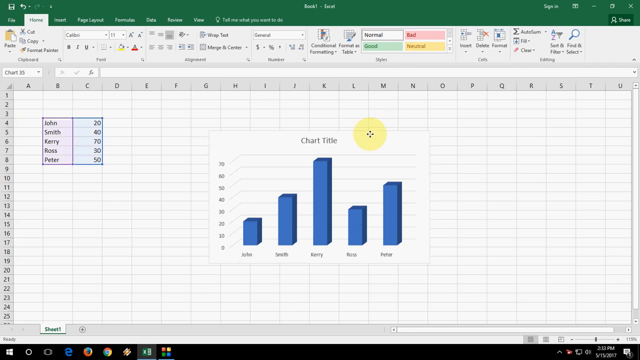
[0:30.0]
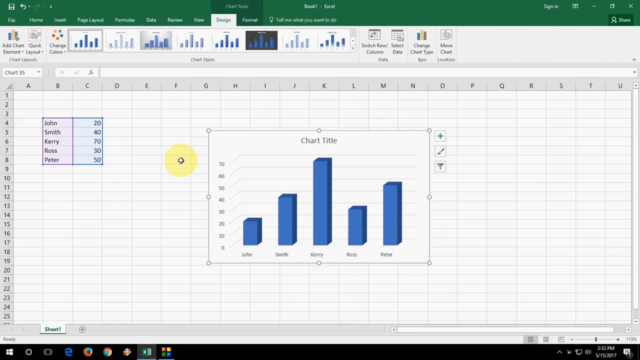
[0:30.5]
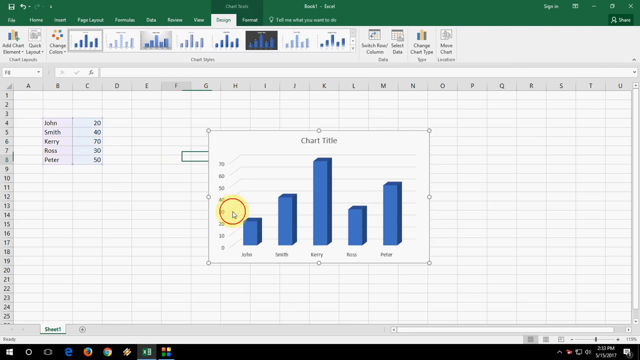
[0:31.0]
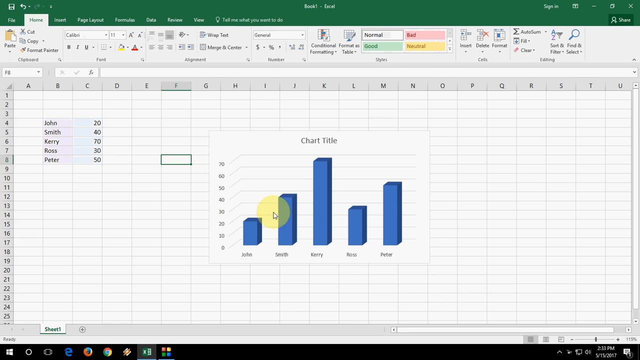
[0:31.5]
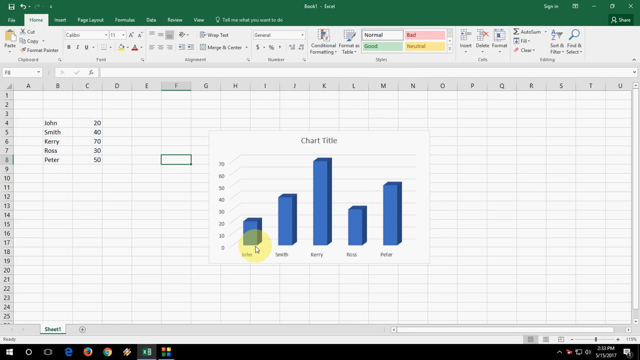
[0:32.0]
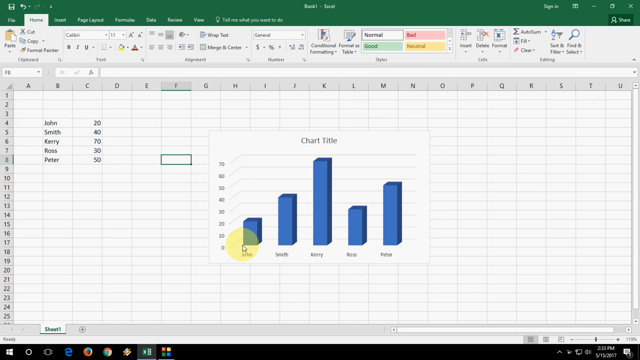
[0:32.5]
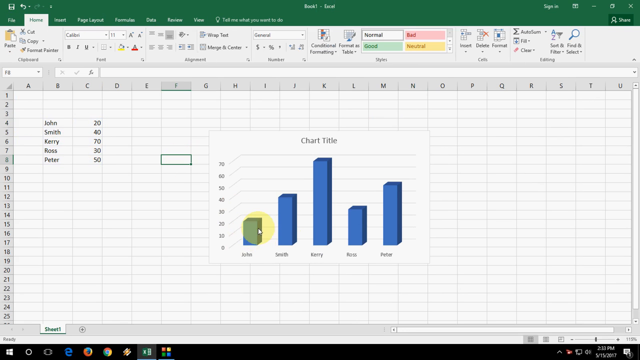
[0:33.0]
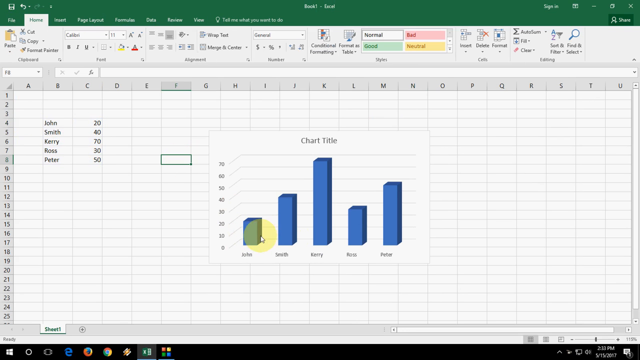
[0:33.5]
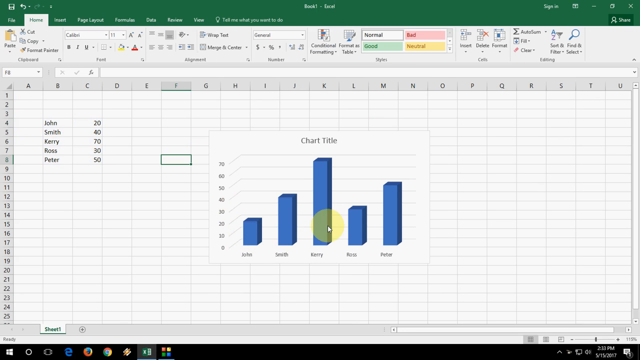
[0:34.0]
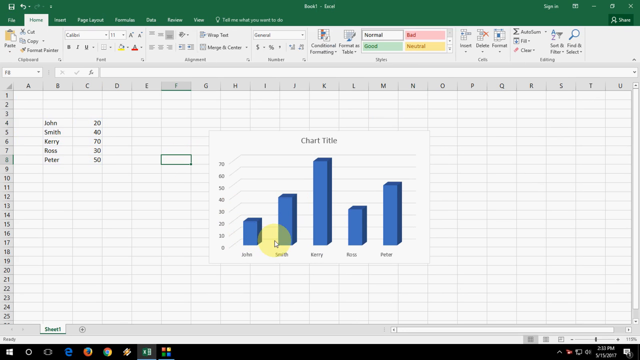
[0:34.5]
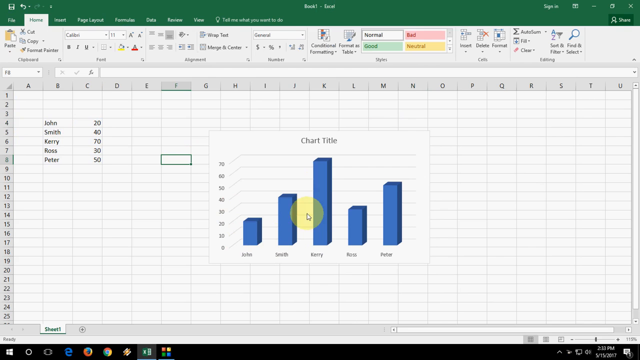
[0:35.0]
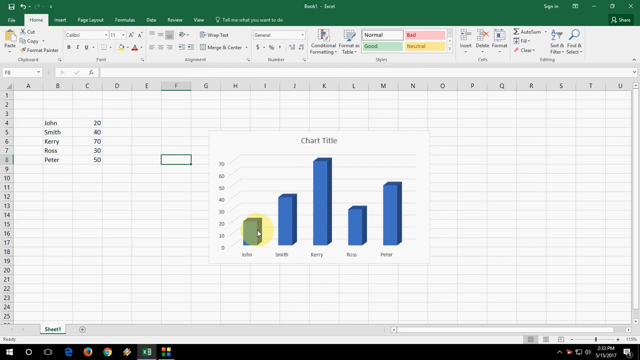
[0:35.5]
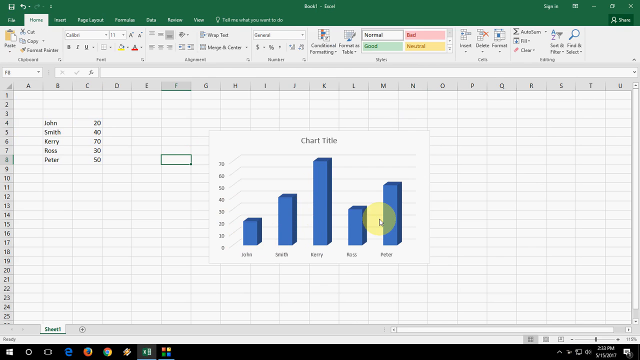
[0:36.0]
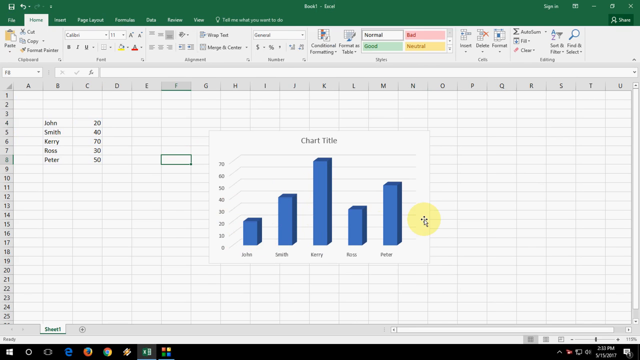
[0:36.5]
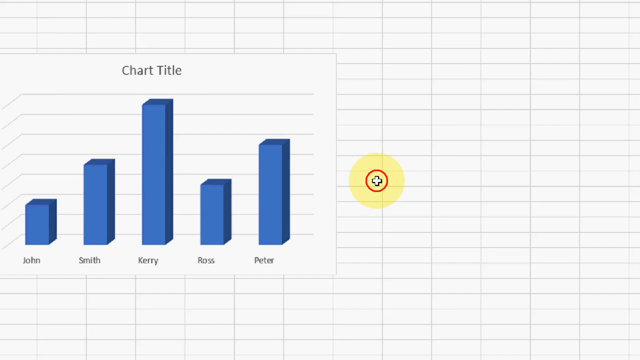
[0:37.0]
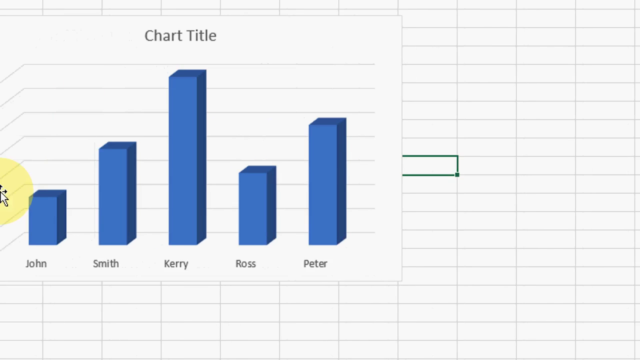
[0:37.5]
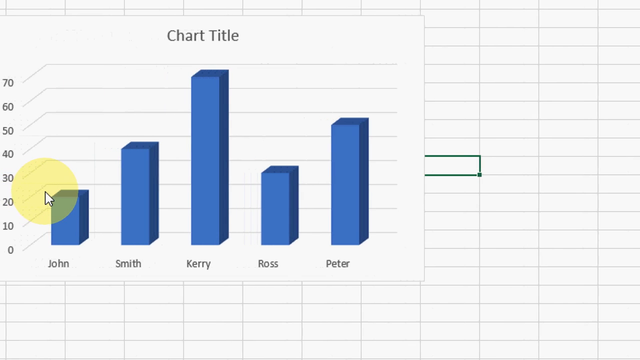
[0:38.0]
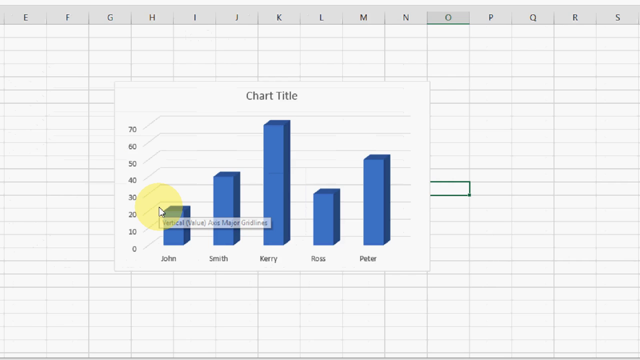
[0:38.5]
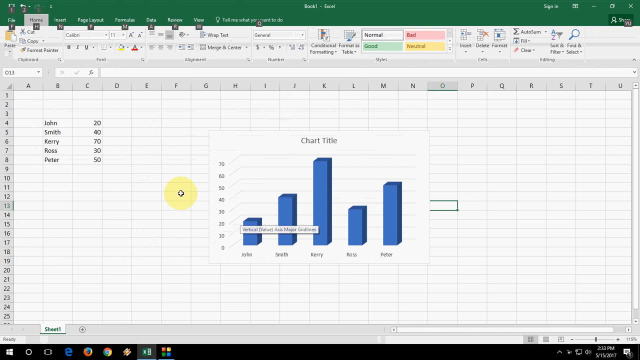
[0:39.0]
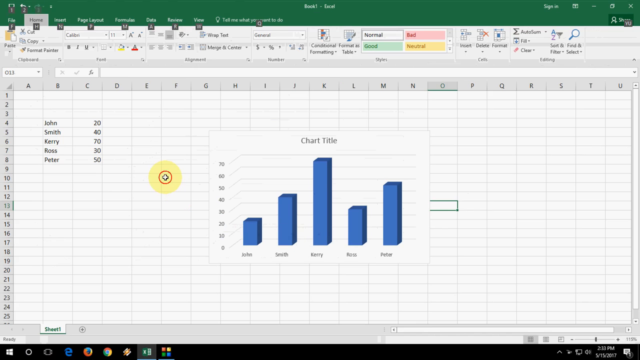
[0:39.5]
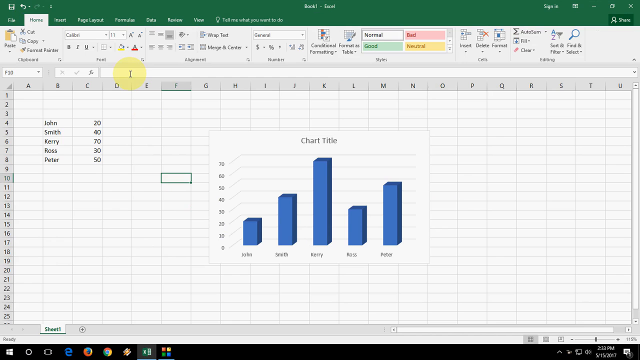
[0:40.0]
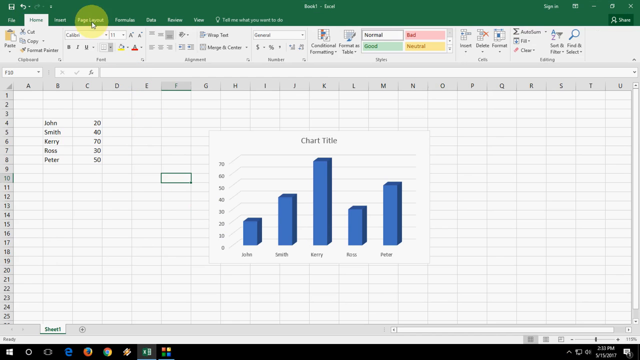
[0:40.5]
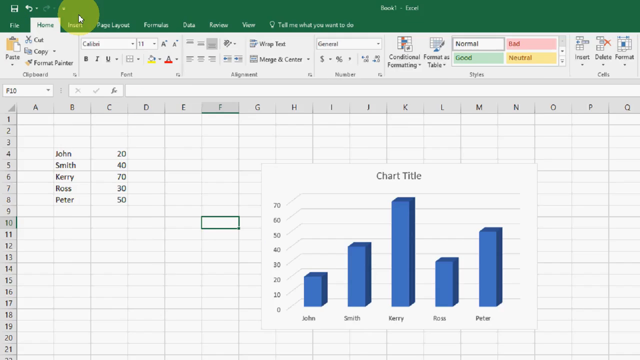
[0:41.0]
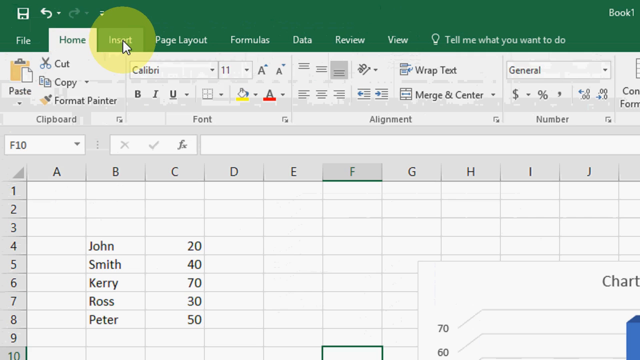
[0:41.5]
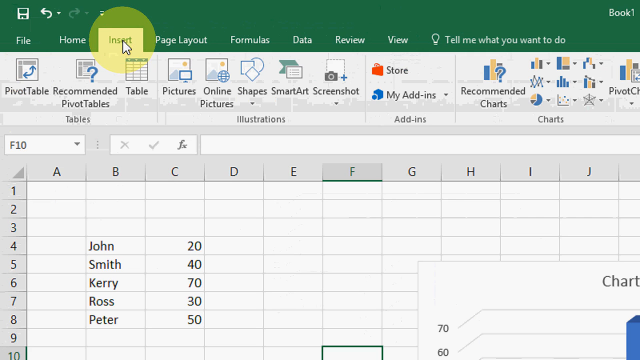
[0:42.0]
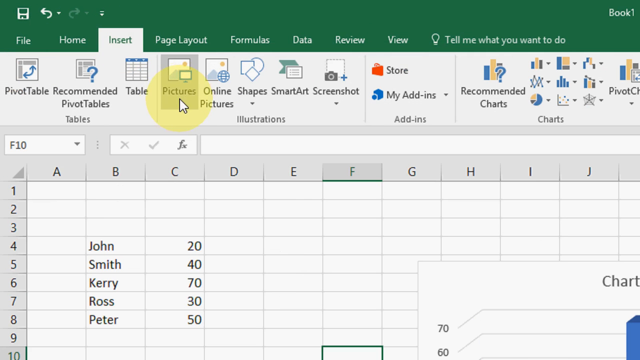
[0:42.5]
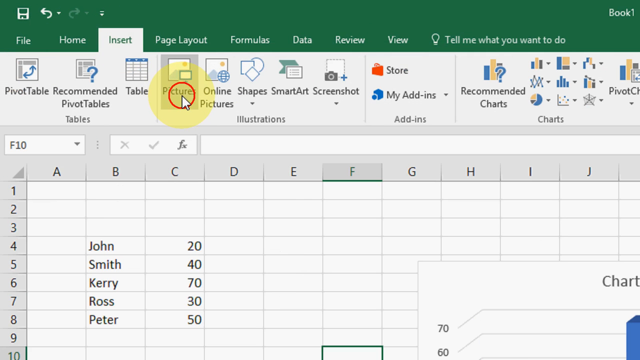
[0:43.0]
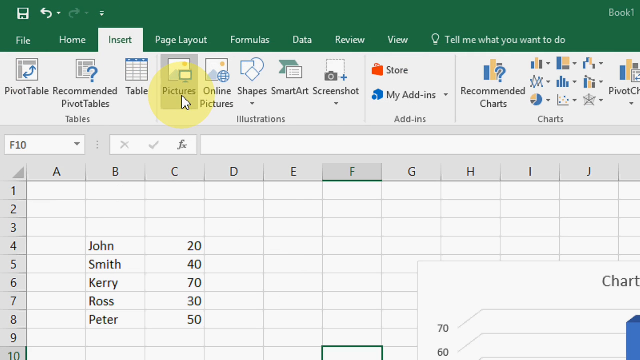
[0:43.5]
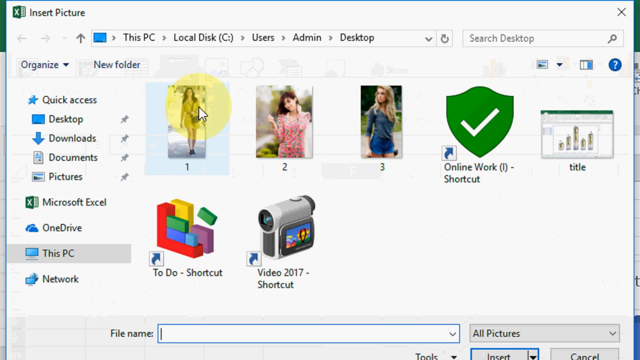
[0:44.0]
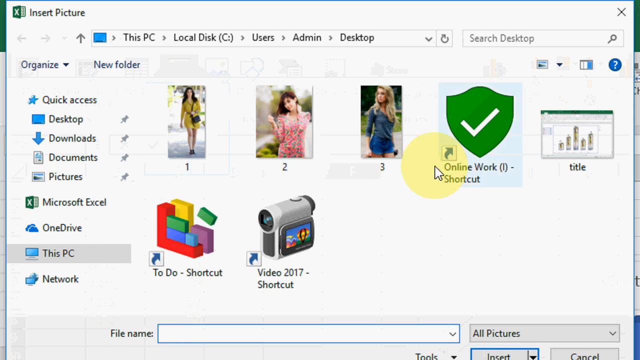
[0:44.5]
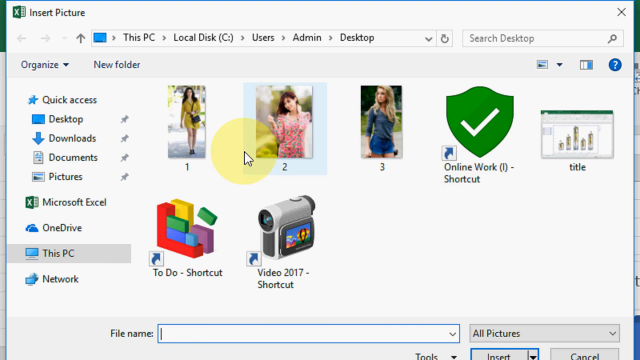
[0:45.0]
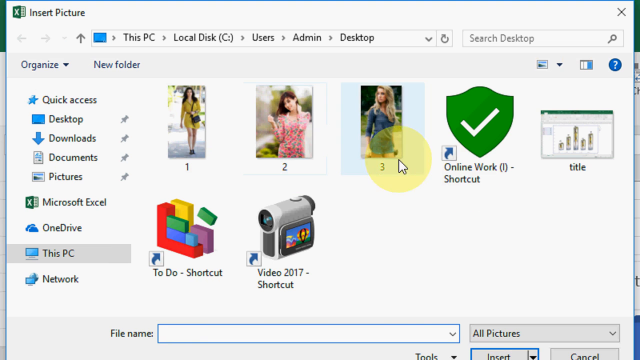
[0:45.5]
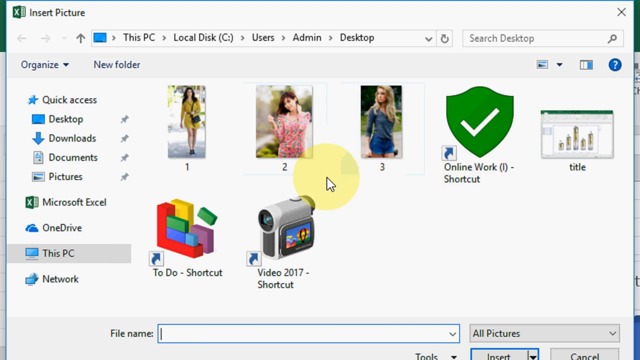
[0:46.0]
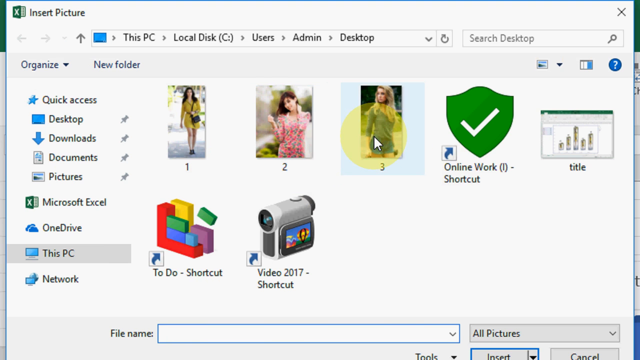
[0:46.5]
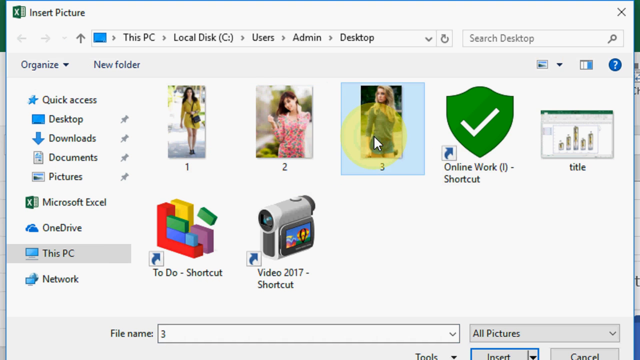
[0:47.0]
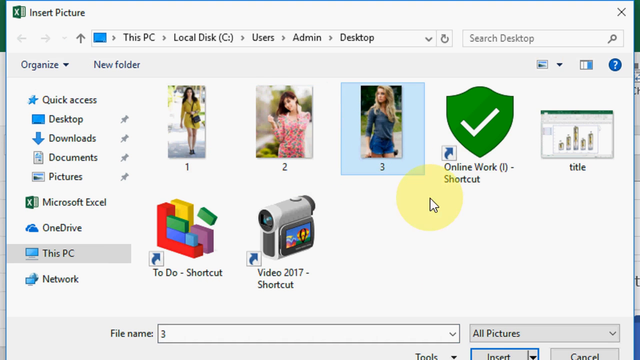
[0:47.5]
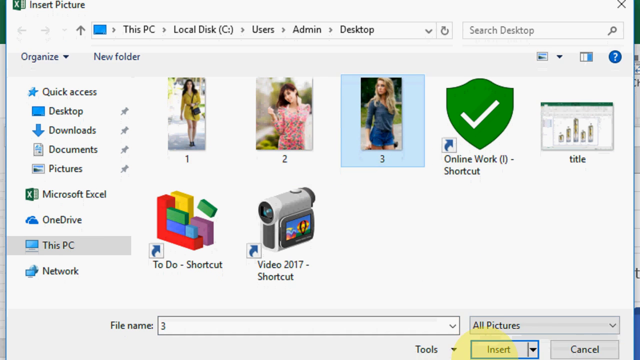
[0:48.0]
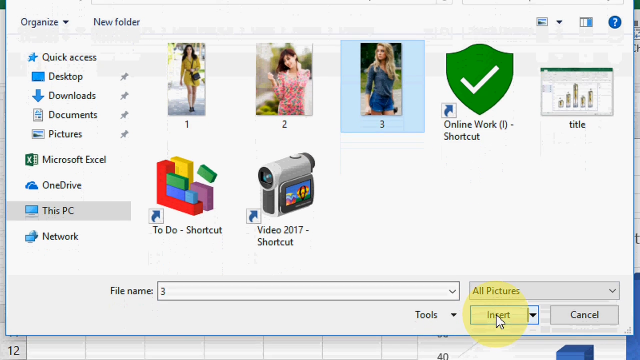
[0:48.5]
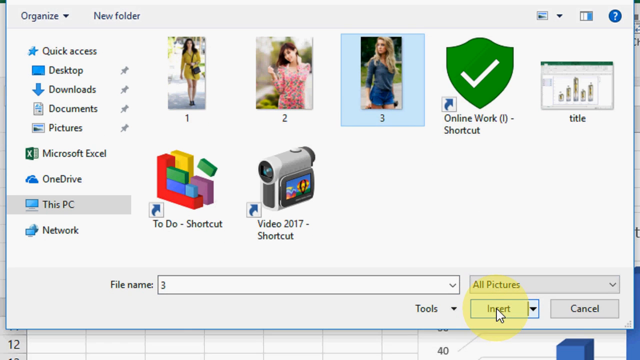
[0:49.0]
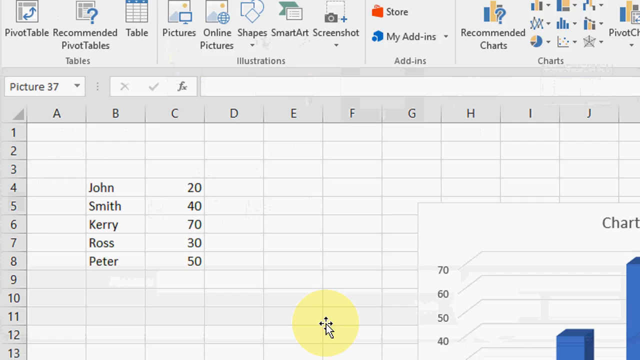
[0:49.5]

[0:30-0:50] A Windows Excel spreadsheet is on the monitor of a Windows PC. The rows are numbered 1 to 25 on the left and the columns run horizontally from A to U. Rows 4 to 8 in columns B to C hold names, with numbers to the right of them. In the middle of the spreadsheet is a pop-up box titled "chart title" that contains the names from the boxes, represented by blue square columns, with numbers from 0 to 70 on the left side. A yellow circle moves with the cursor over the chart and the blue columns. The cursor scrolls up to Insert and clicks on Pictures, a folder on the PC opens, and a picture is clicked, grabbed and dragged.